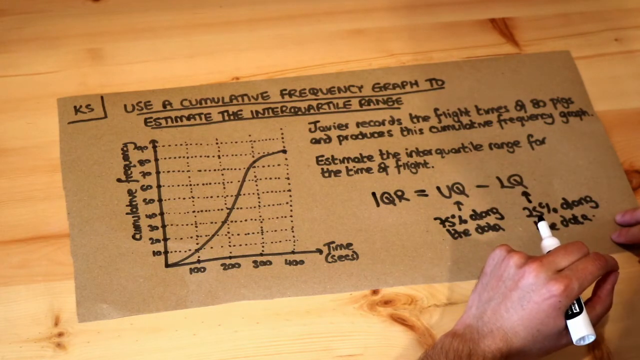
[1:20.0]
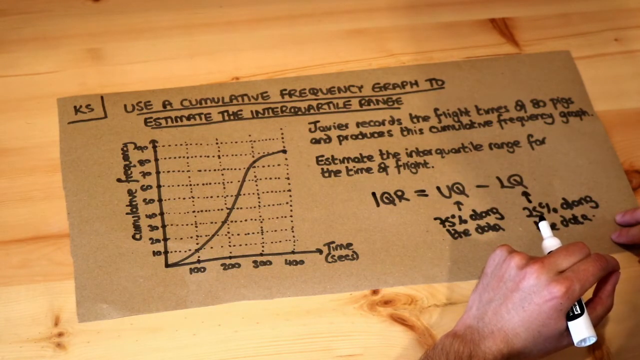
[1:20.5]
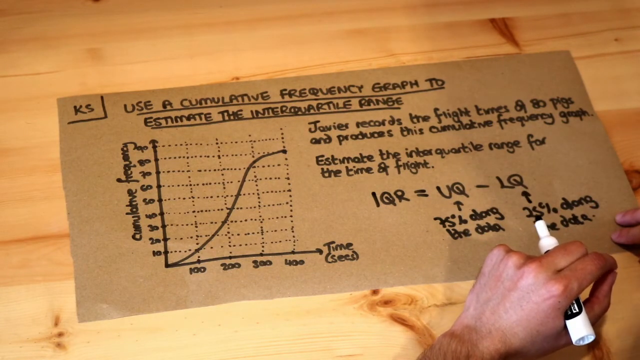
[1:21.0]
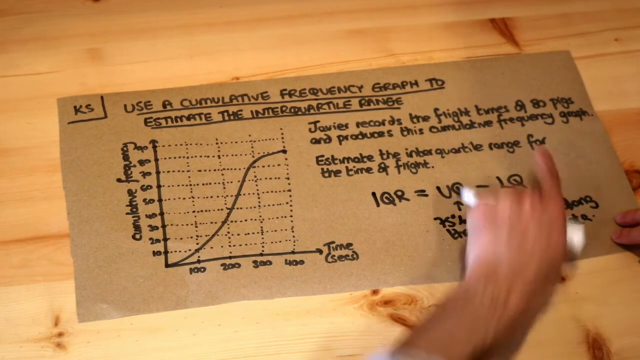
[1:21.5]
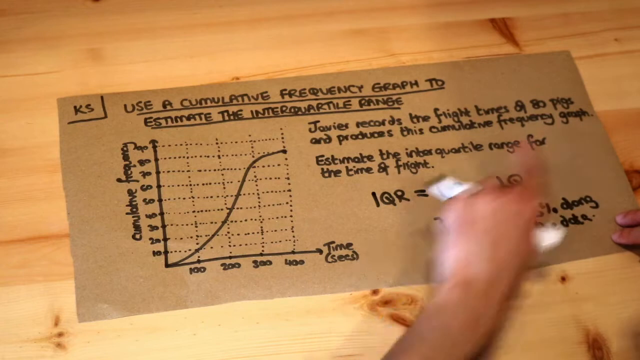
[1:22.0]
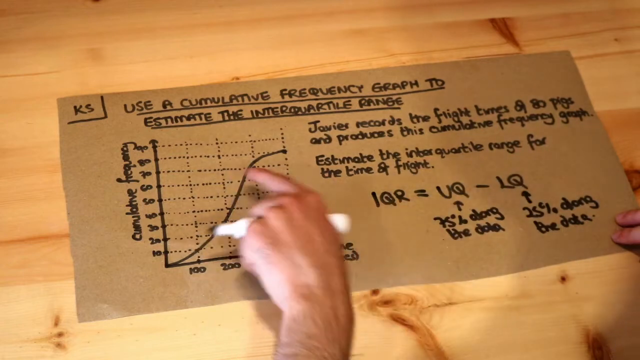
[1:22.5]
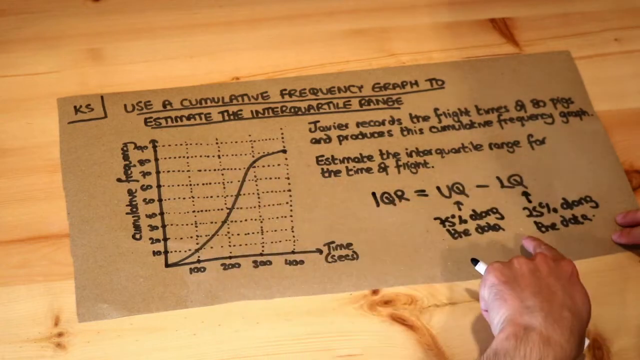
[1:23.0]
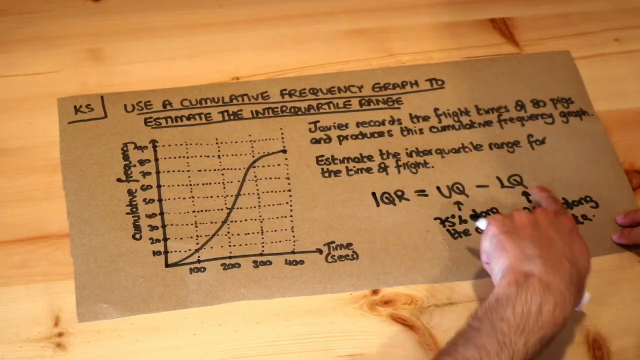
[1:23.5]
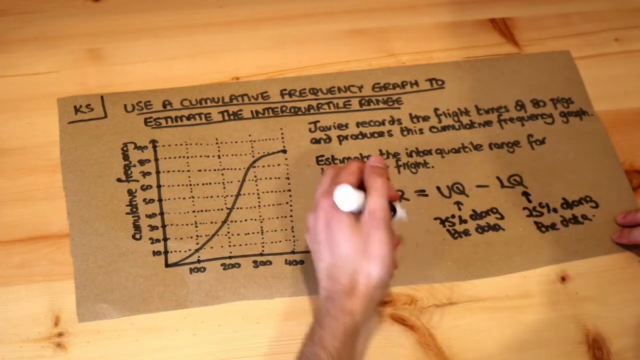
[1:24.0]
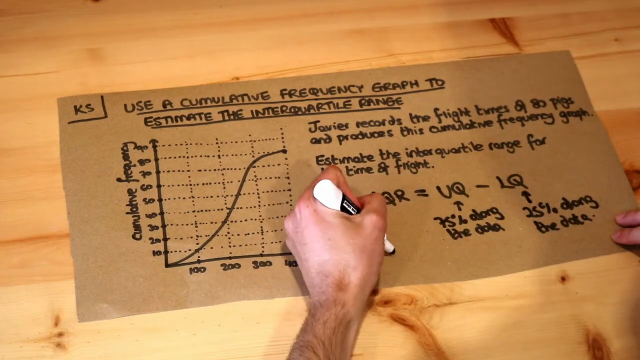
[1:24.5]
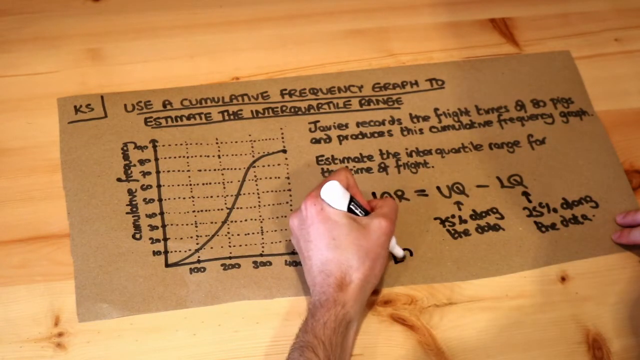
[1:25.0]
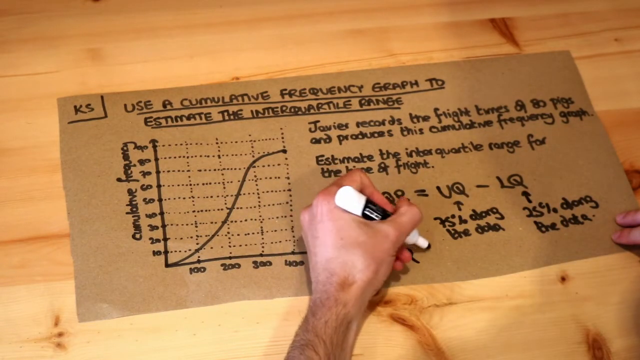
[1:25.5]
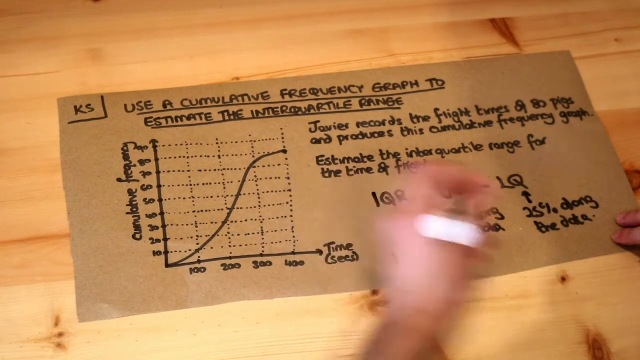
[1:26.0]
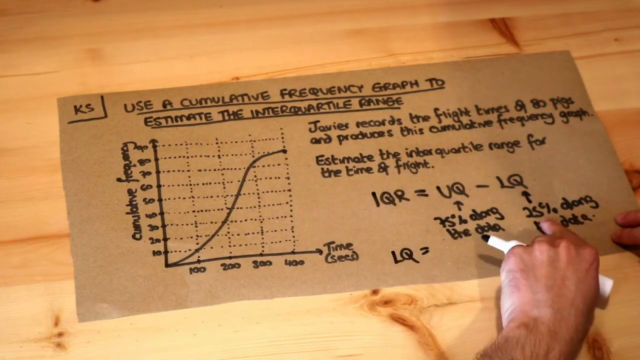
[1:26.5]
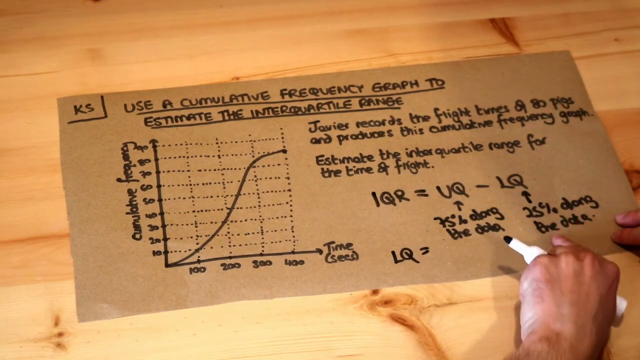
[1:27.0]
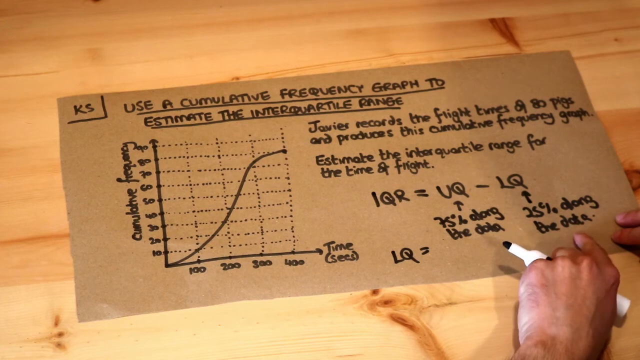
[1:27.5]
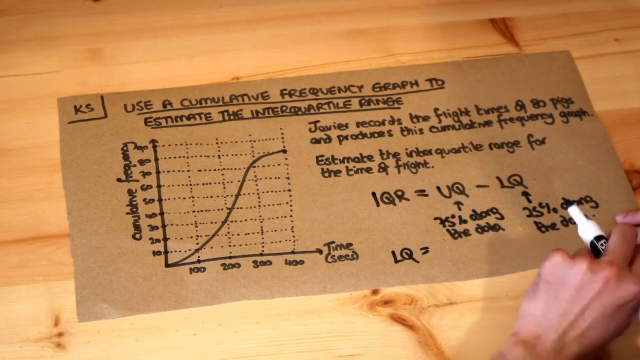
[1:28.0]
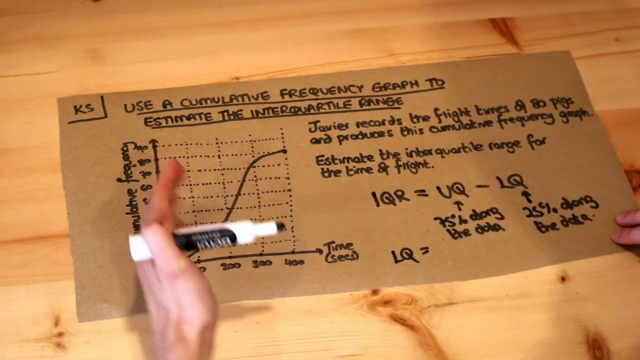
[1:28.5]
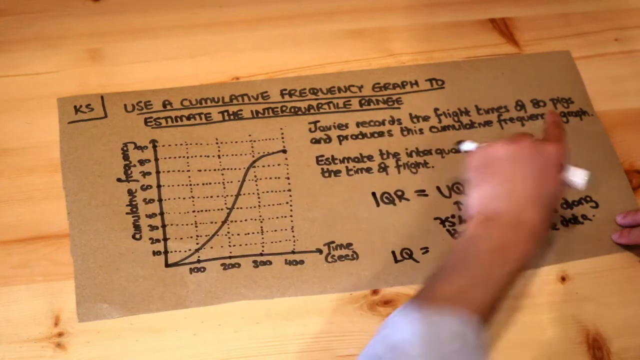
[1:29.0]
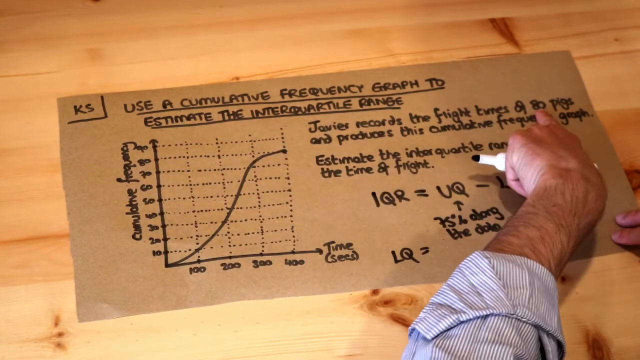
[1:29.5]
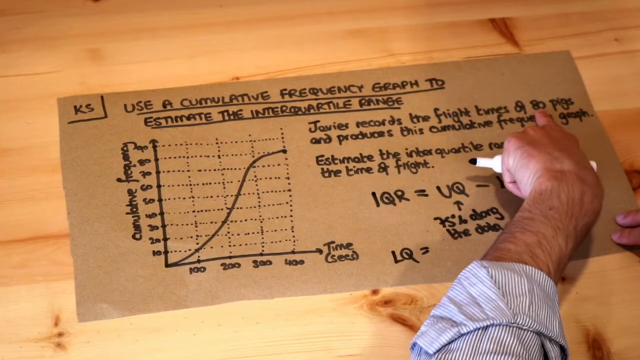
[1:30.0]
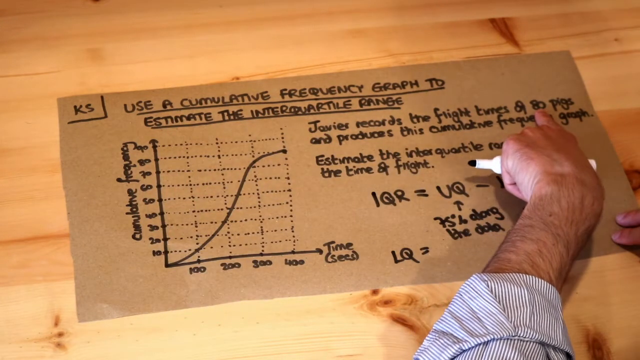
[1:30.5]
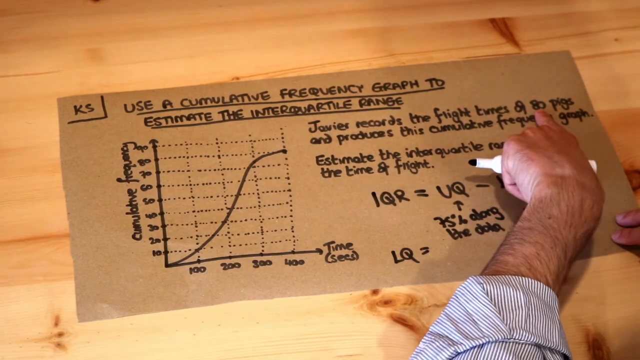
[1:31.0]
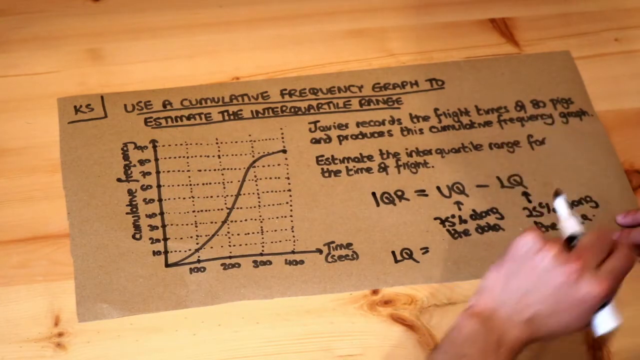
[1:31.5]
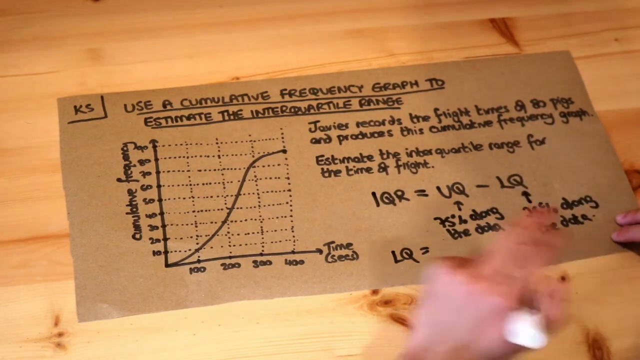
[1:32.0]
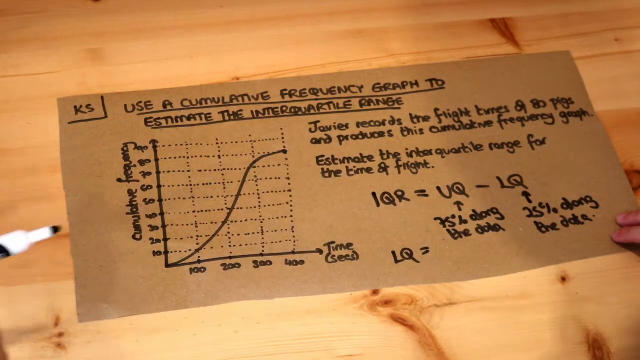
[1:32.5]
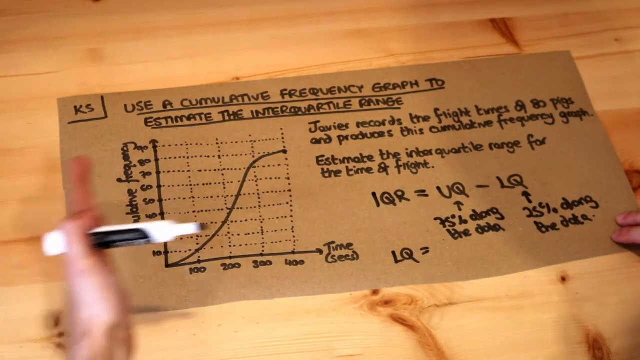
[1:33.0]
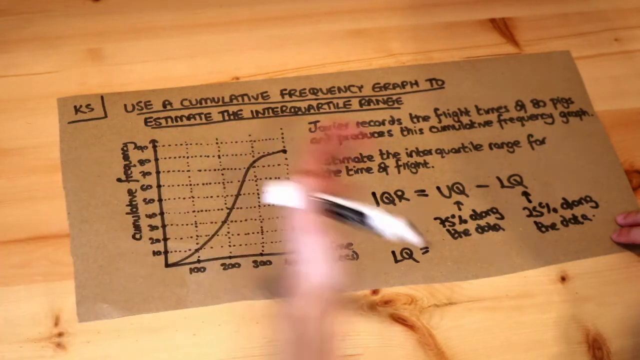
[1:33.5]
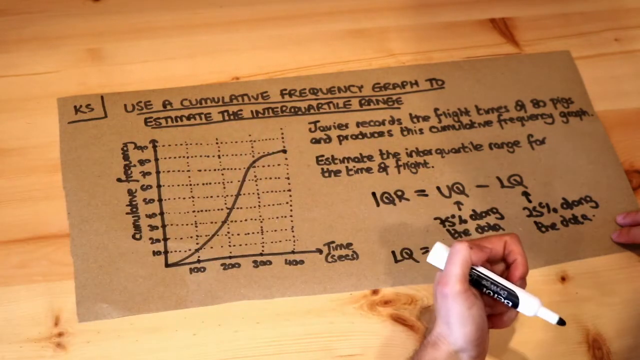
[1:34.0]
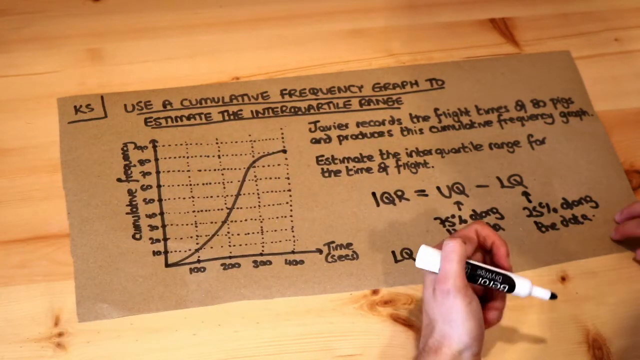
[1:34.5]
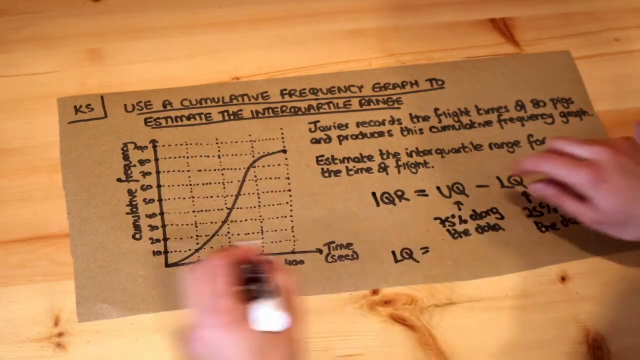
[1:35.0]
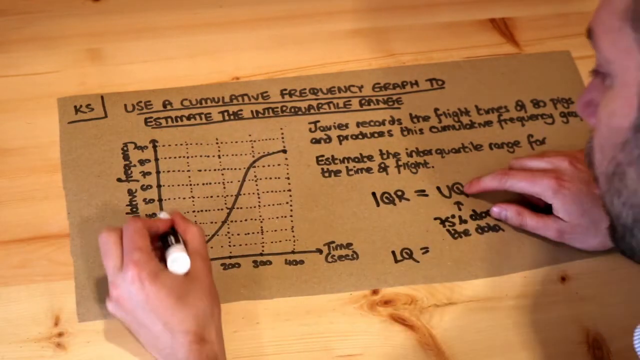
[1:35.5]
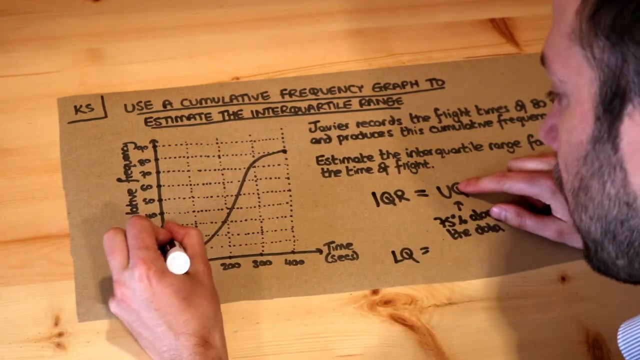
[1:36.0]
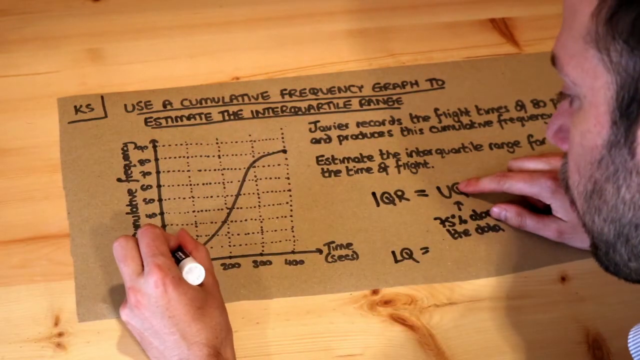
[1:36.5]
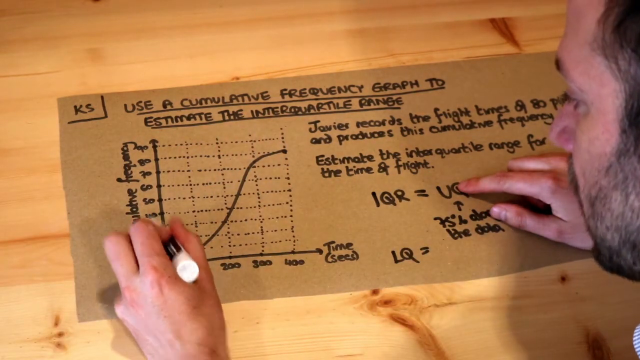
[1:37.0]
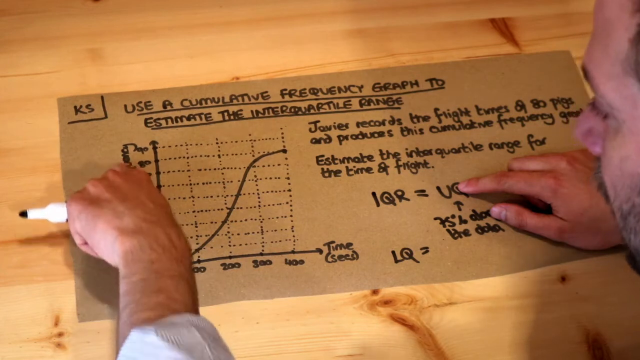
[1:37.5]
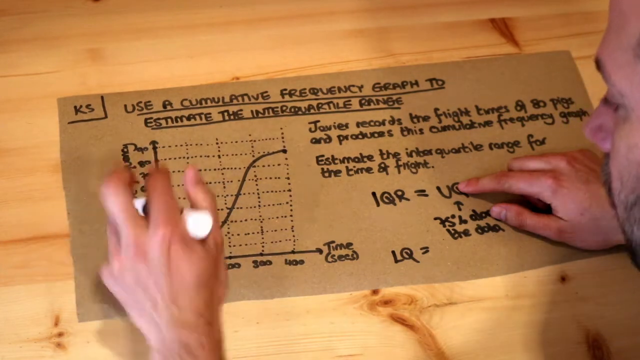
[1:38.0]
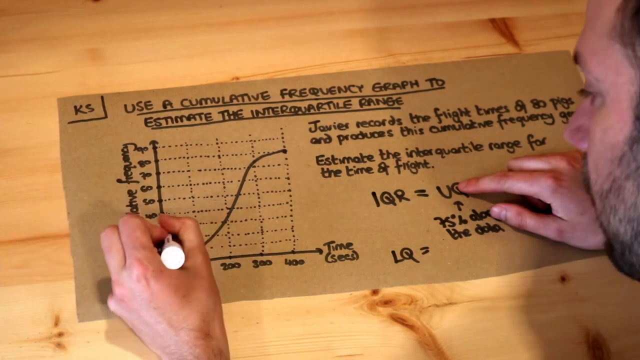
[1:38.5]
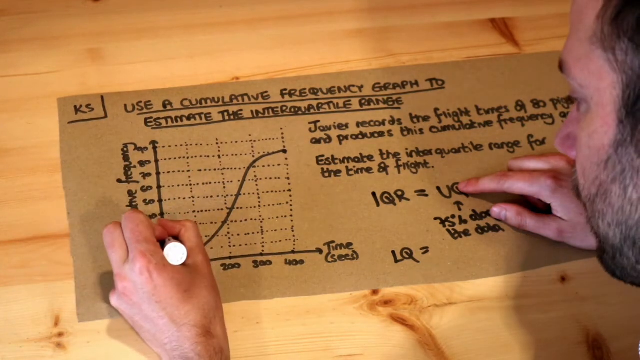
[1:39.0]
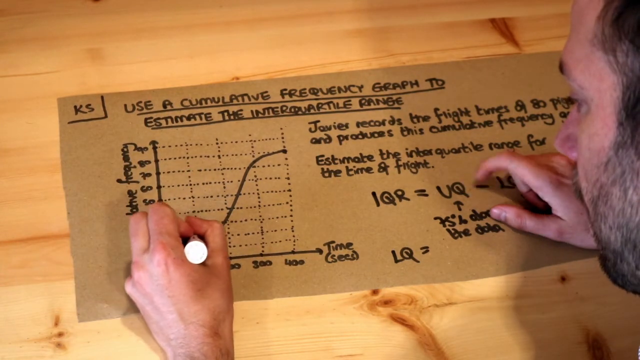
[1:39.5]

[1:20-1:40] A piece of cardboard shows a graph drawn by a man: a bar graph with a curved line that increases from left to right, with time as the bottom measurement and cumulative frequency as the side measurement. The man's head and the left side of his face are shown, and he has a beard. He holds a black magic marker, which he has used for all the writing. The graph is titled "use a cumulative frequency graph to estimate the interquartile range." He has written two sentences and an equation, "1qr equals uq minus lq," with arrows: one with "75 percent" followed by an unreadable word and "data", and an arrow to the last figure with "25 percent" and something else. He leans in and makes a small adjustment to the graph. He points to the sentences and begins writing another equation, "lq equals," pointing to information in the sentences and adjusting the graph.